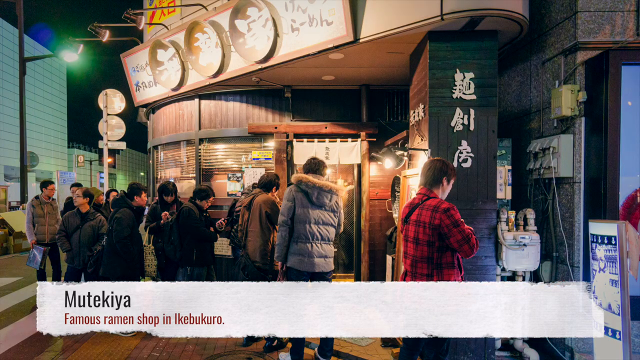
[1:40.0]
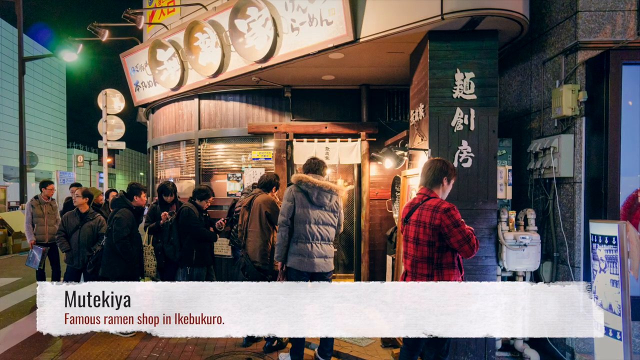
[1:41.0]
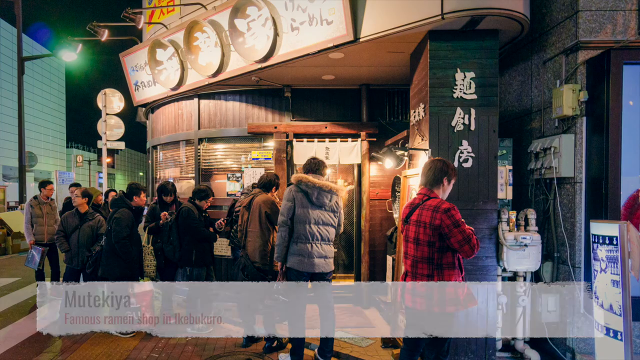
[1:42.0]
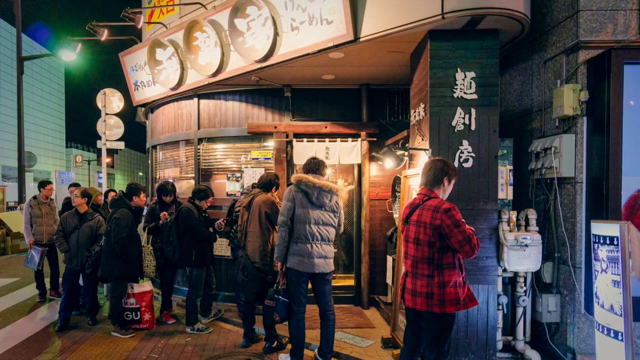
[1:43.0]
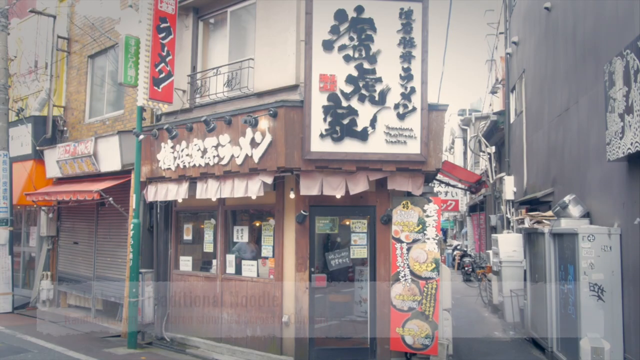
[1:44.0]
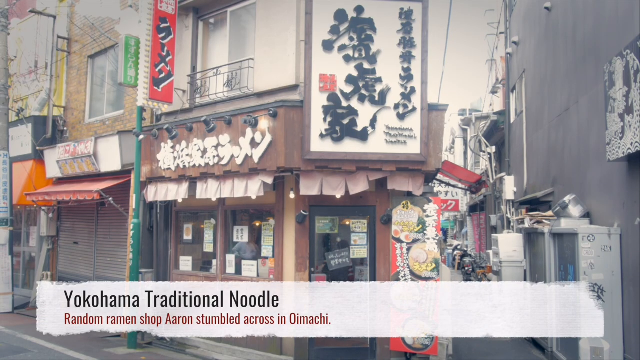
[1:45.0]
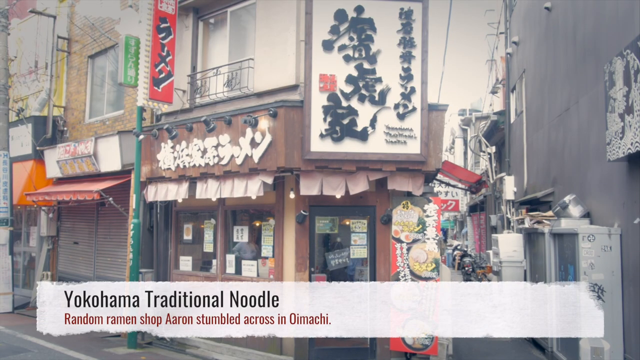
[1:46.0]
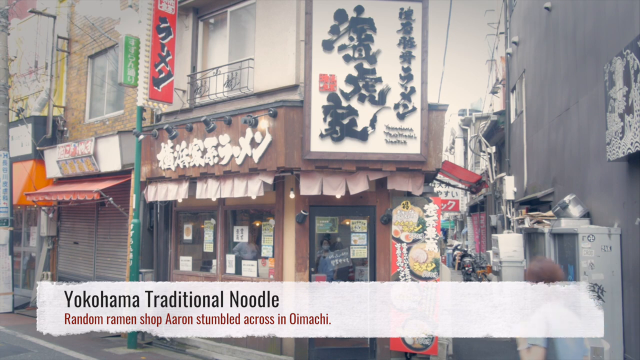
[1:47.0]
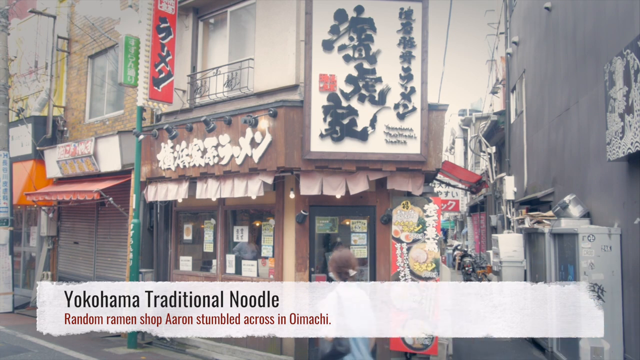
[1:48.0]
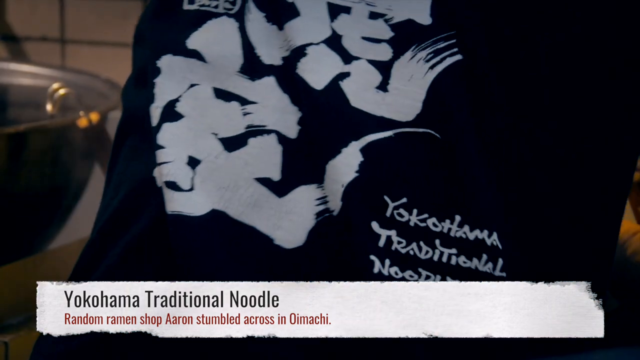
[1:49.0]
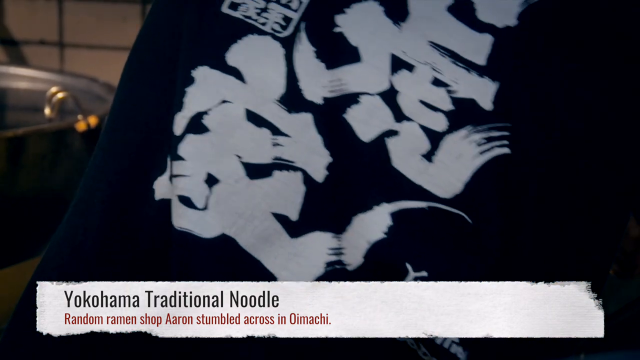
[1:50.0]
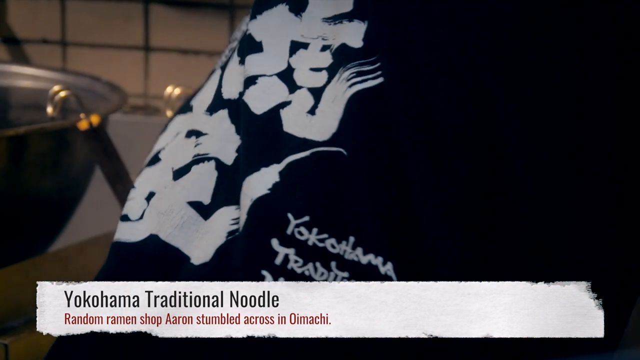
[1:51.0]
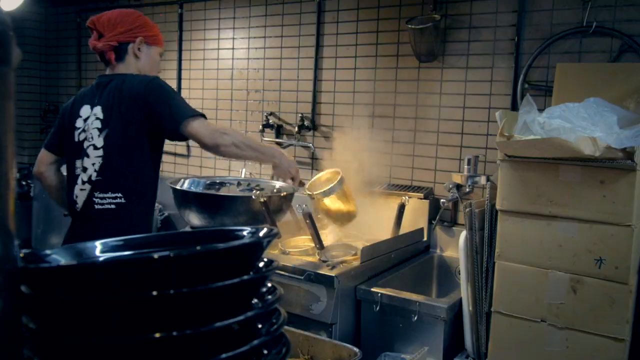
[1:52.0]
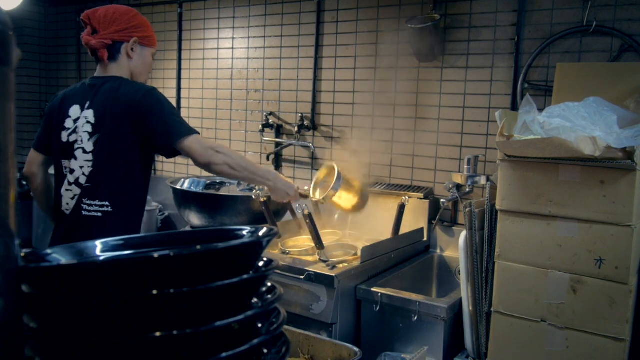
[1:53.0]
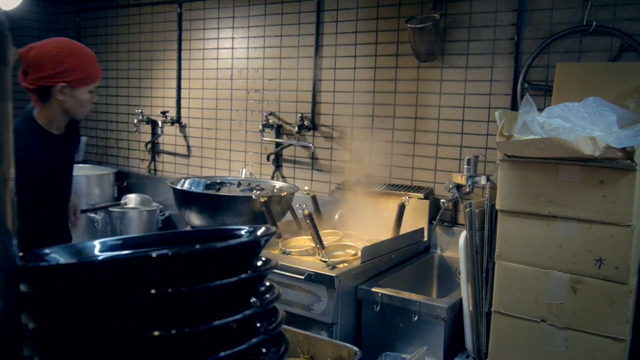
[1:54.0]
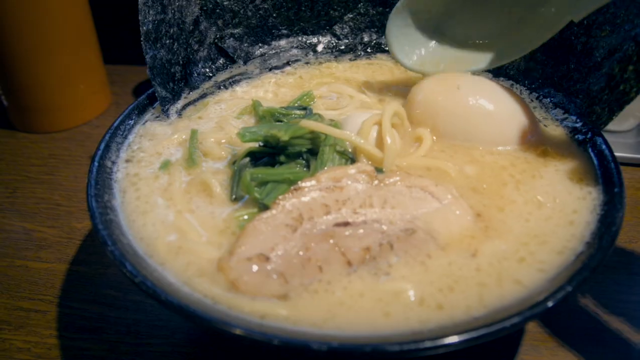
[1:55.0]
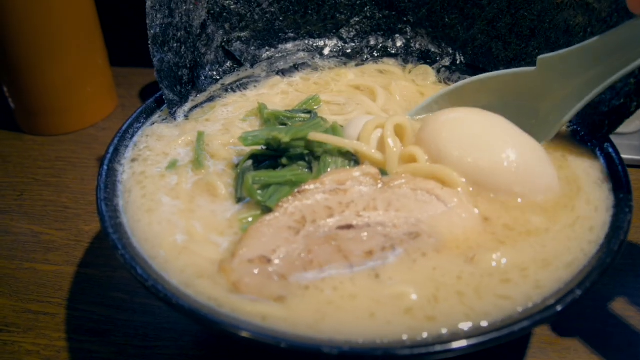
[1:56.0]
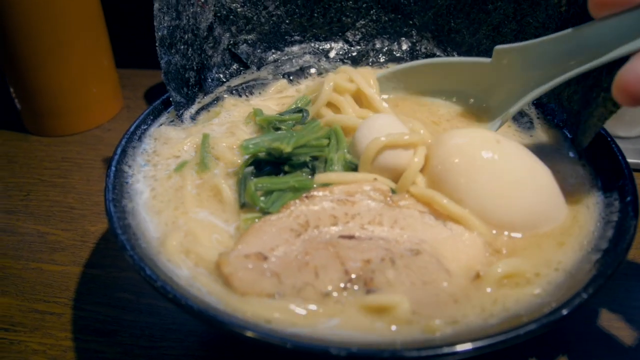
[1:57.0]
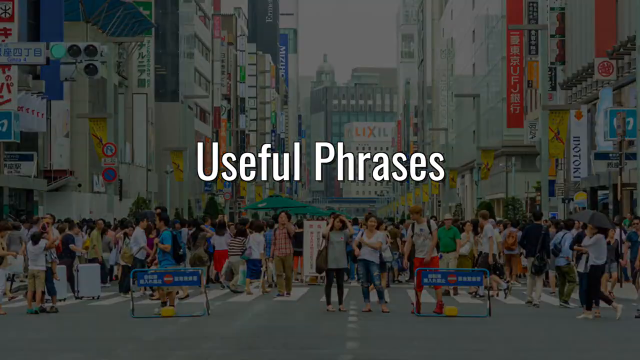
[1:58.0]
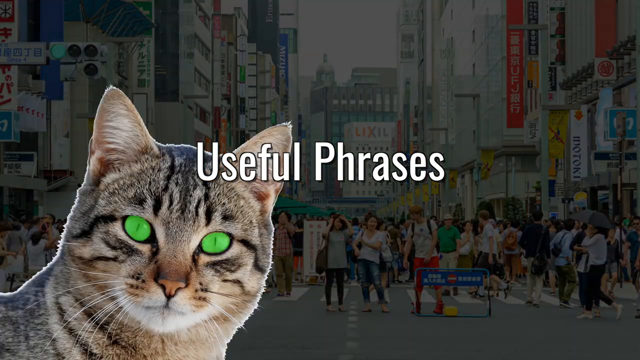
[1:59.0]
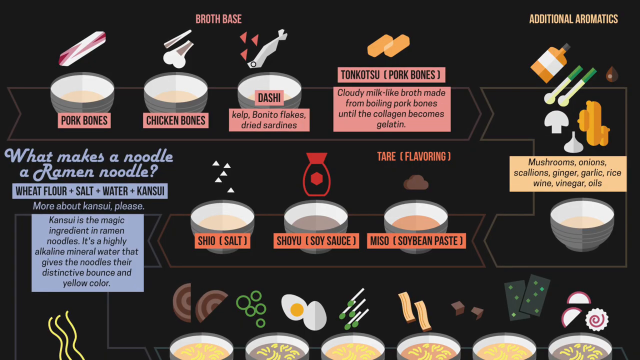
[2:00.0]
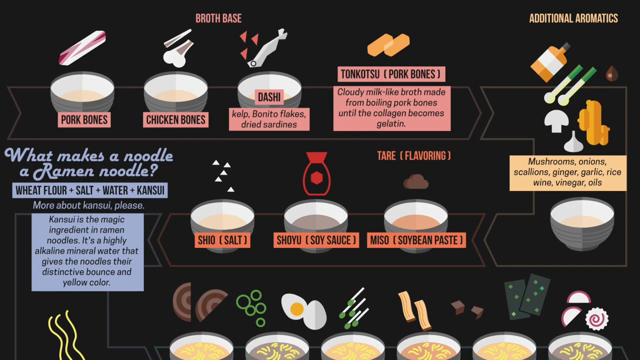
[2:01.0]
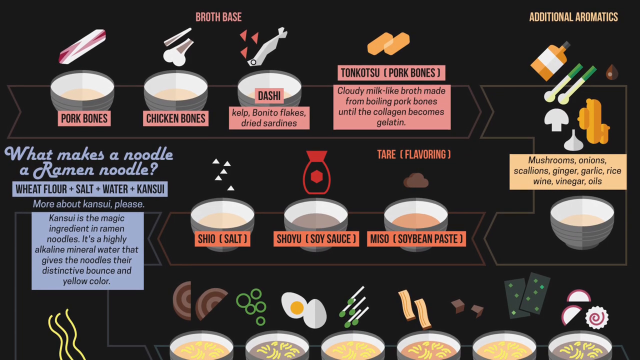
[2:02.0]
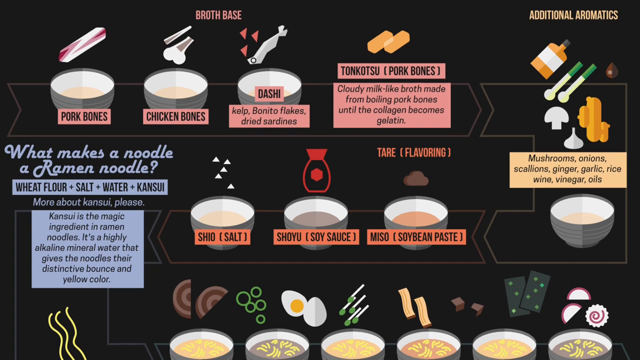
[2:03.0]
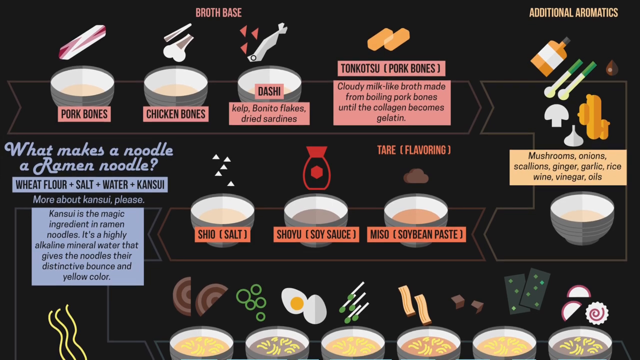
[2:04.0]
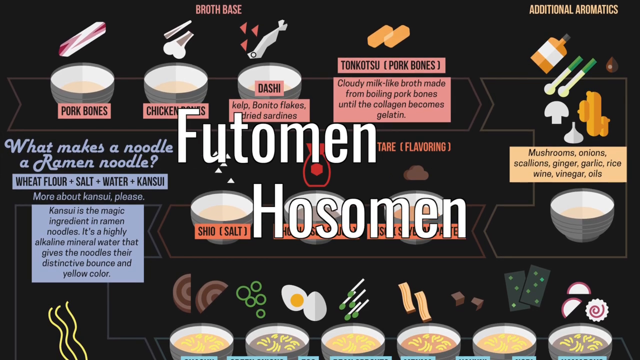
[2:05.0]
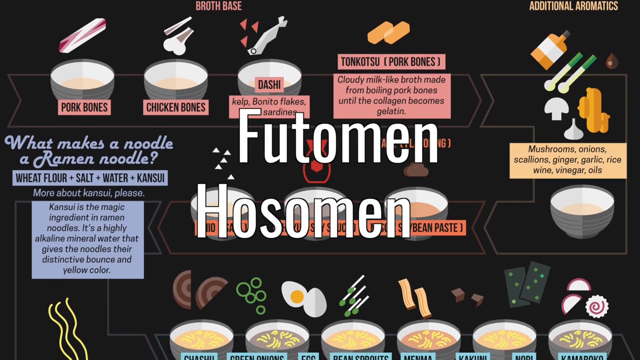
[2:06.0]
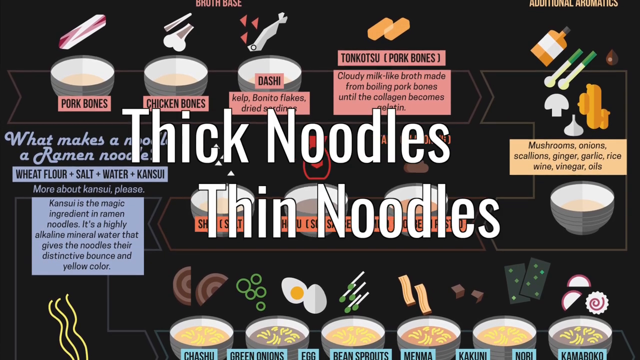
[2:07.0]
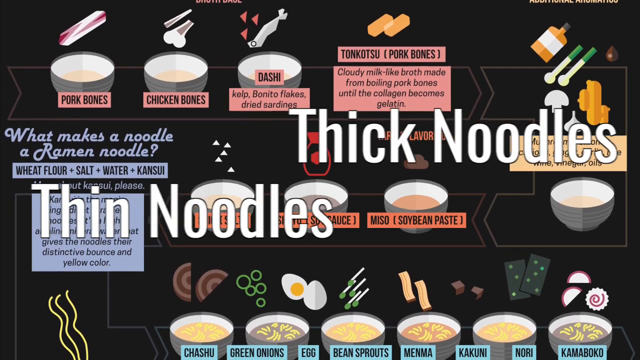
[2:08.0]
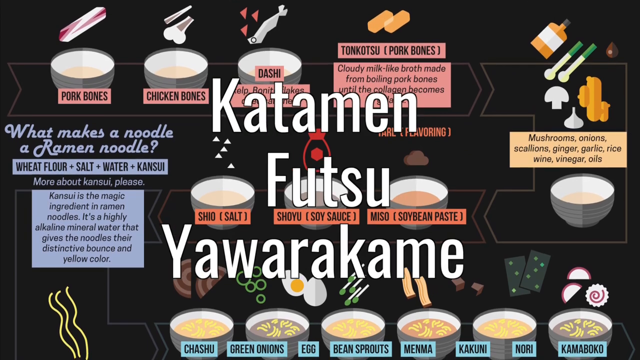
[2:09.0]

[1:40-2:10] An image shows Mutekiya's ramen shop with loads of people outside, one of them in a red flannel jacket. The video switches to an image of Yokohama traditional noodle, then to a random ramen shop Aaron stumbled across in Oimachi, with a white banner of text on the bottom. The brown ramen shop has Japanese writing and big signs, on a street, with a balcony. At Yokohama traditional noodle there is a banner, a flag, and a man who is cooking ramen. Then a person with a spoon in a bowl spoons up egg, noodles and seaweed. Another screen says "useful phrases," with a cat and people in the background. The video then goes back to what makes a noodle a ramen noodle, with lots of text and images showing the broth base, tonkotsu, pork bones, dashi, chicken bones and other ingredients.